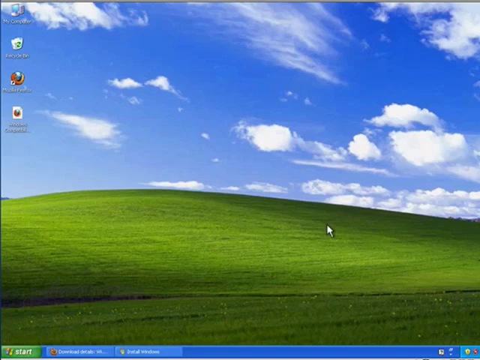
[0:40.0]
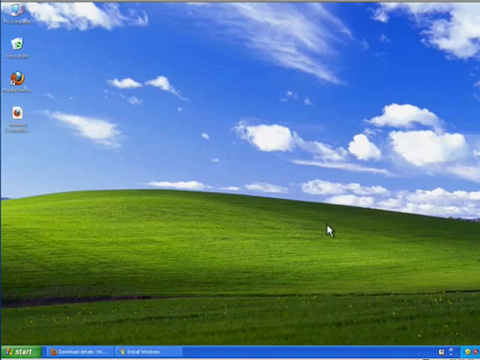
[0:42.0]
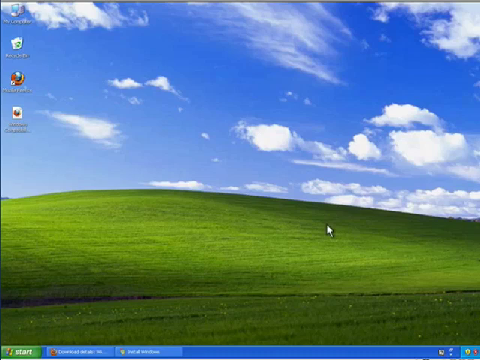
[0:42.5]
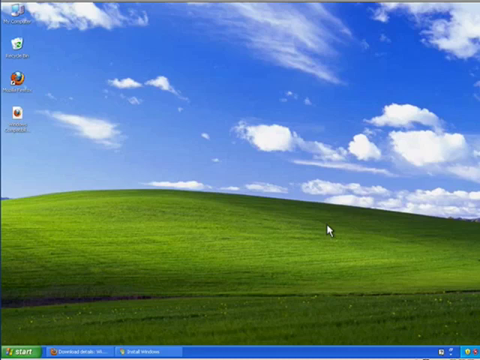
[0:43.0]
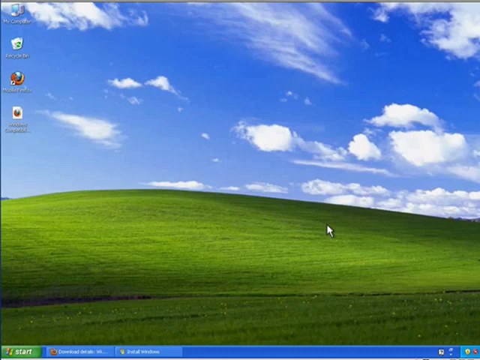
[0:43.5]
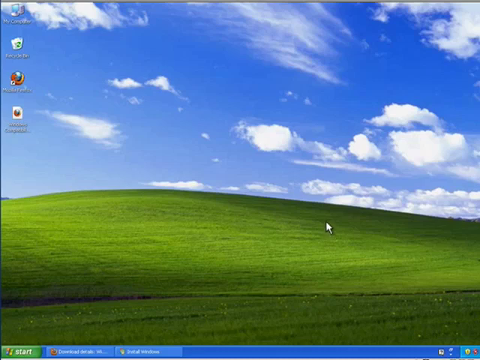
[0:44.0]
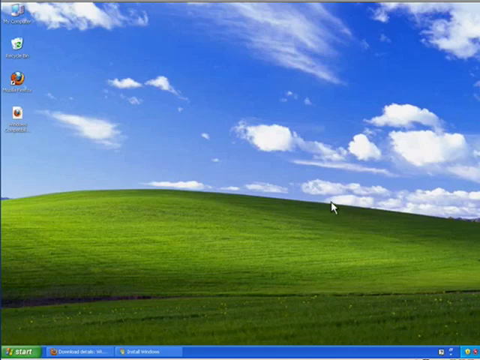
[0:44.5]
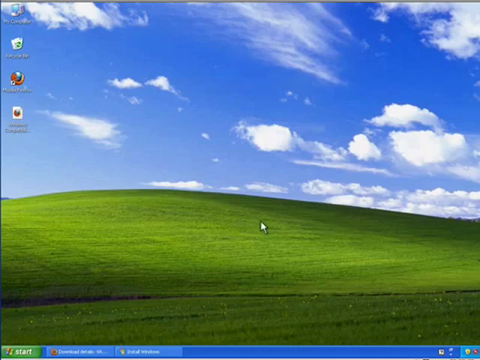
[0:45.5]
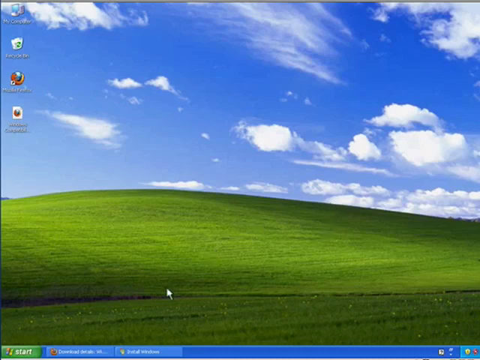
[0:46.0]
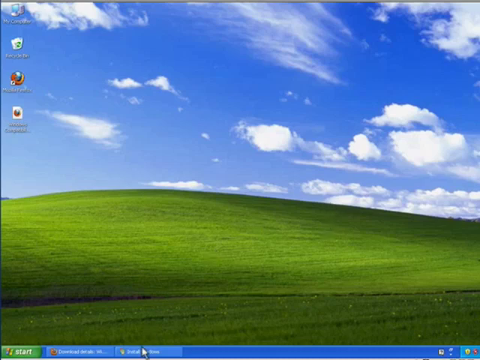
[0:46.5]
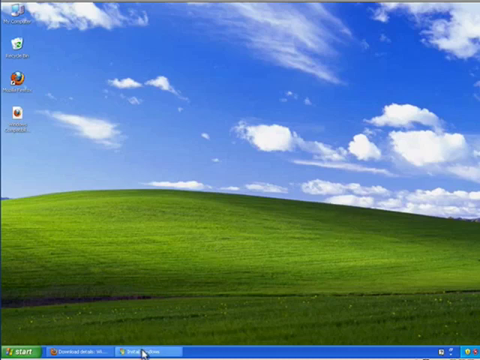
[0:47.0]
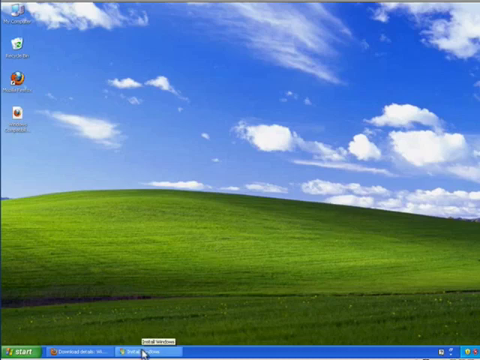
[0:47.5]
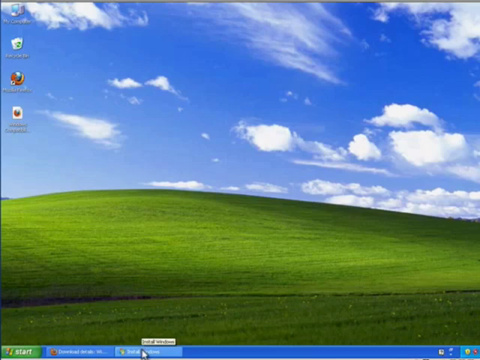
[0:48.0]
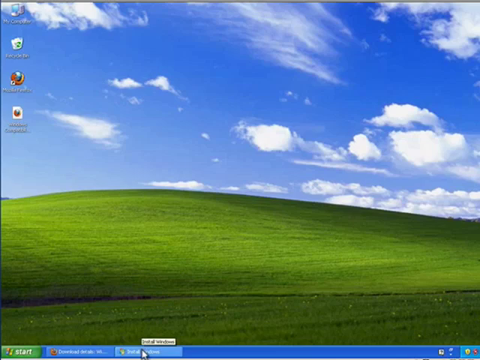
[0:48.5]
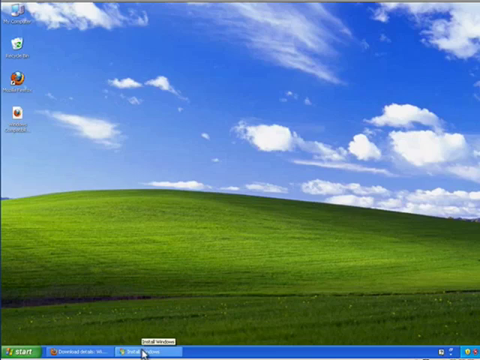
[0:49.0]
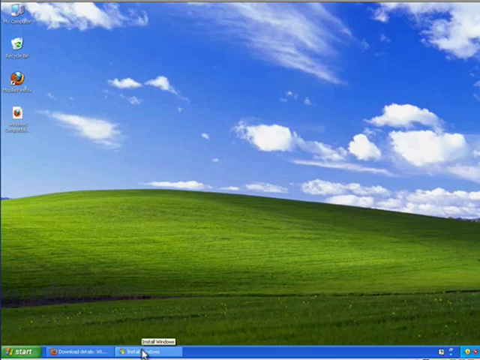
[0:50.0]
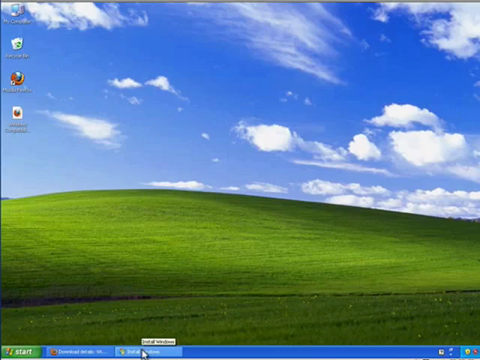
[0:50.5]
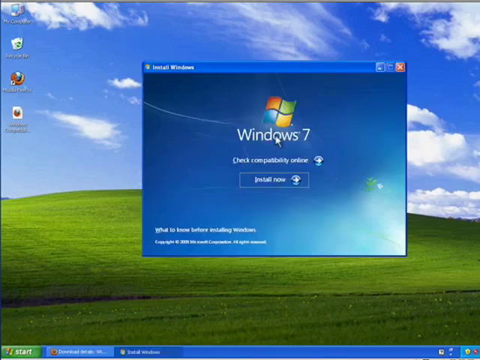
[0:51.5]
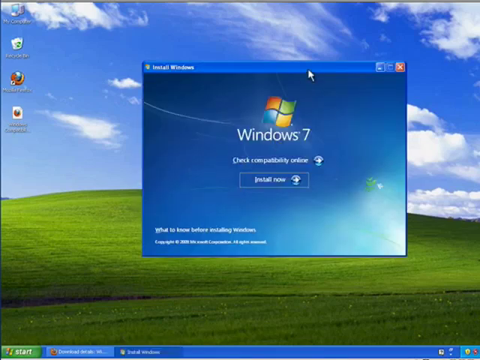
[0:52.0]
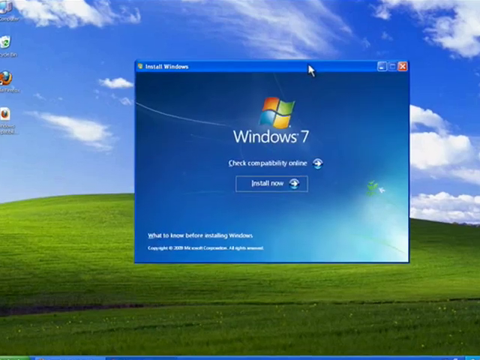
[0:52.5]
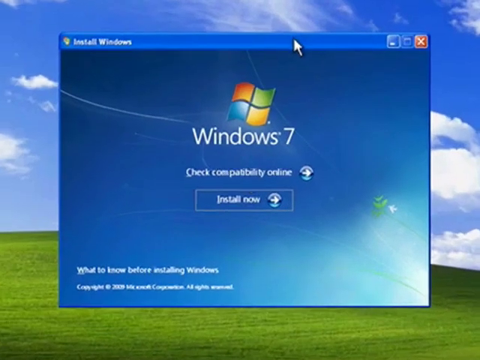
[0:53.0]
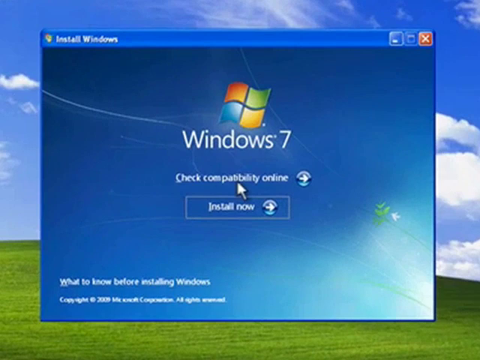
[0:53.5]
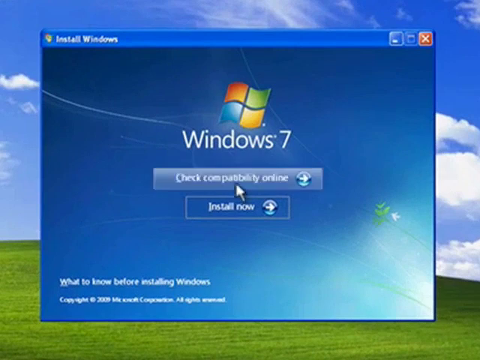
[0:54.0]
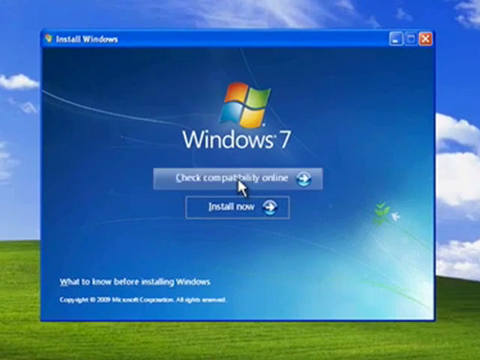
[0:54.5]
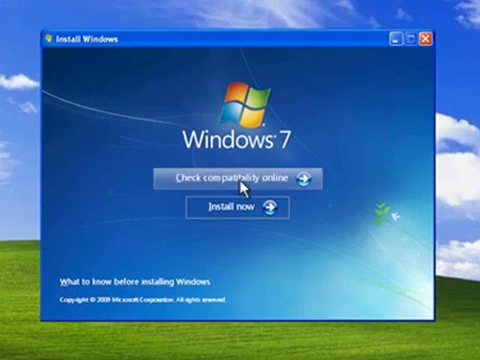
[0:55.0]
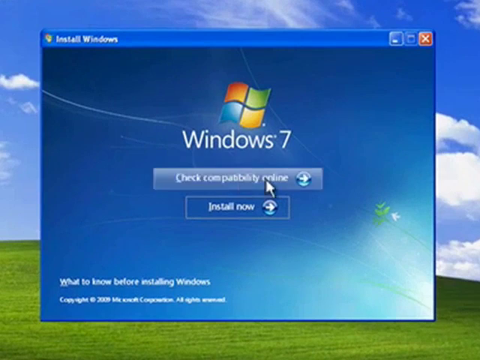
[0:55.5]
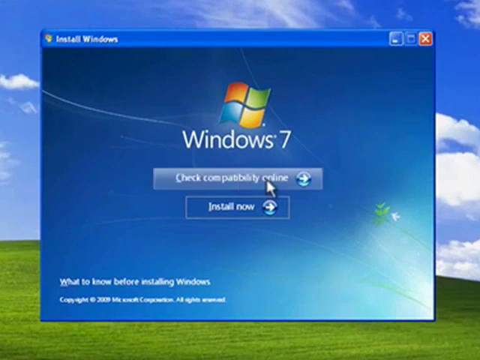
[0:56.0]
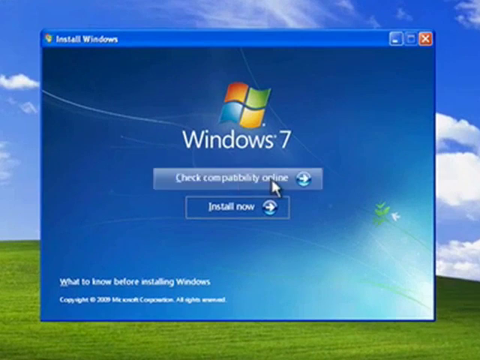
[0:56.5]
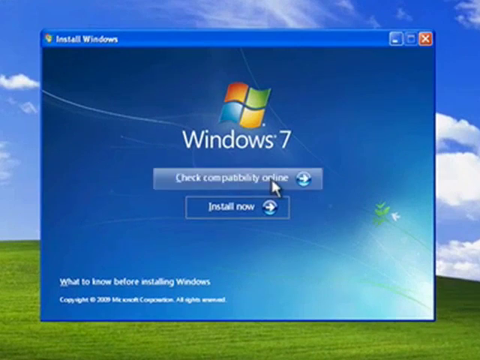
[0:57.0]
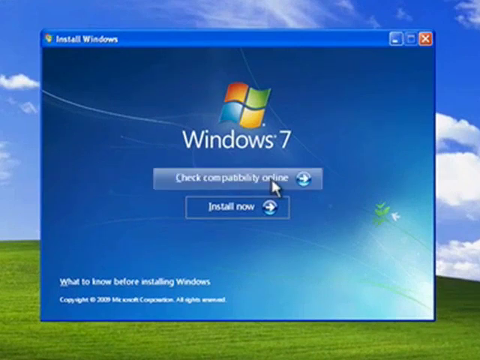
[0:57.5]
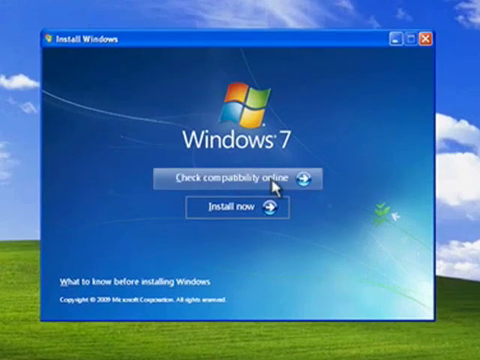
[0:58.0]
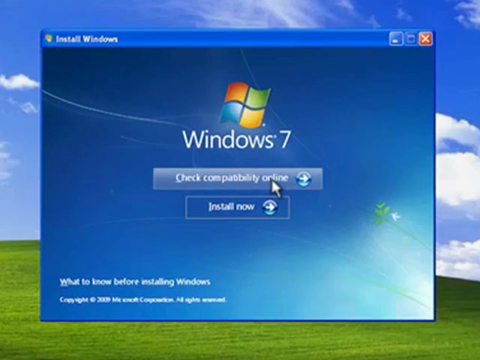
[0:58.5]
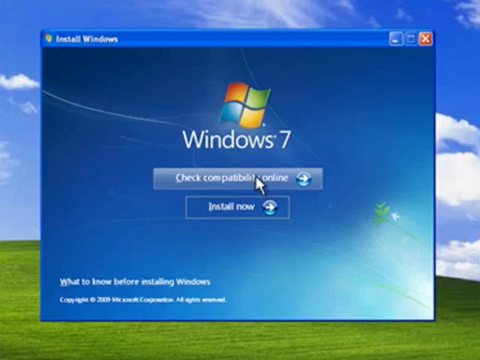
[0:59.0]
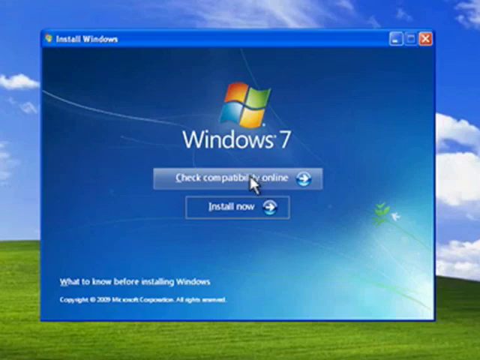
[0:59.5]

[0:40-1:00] The computer background shows a wide-open hill at the bottom and blue skies with white fluffy clouds at the top. A person clicks on the farthest right tab at the bottom right, which opens a Windows 7 box with options to check compatibility online and an install now button. The box also says "what to know before installing Windows," and a copyright date too blurry to read is in the lower left-hand corner. At the very top it says "install Windows," with a minus button to minimize and an X button to close the page.